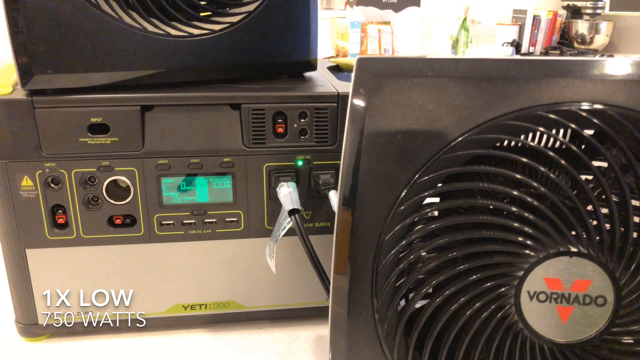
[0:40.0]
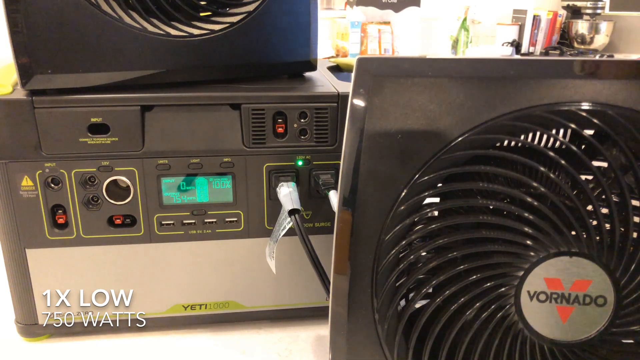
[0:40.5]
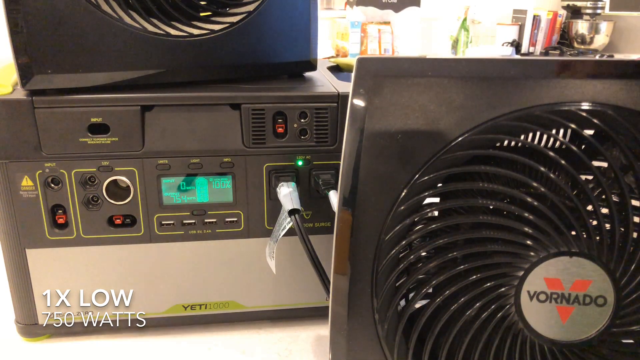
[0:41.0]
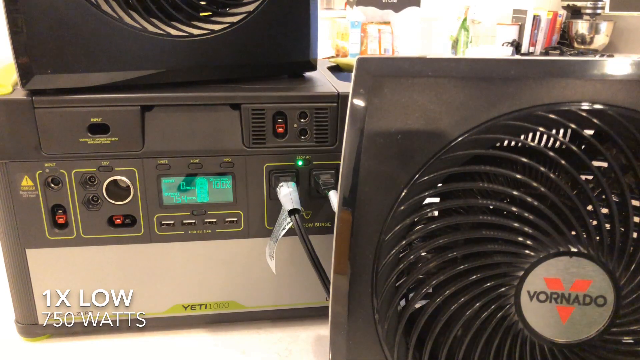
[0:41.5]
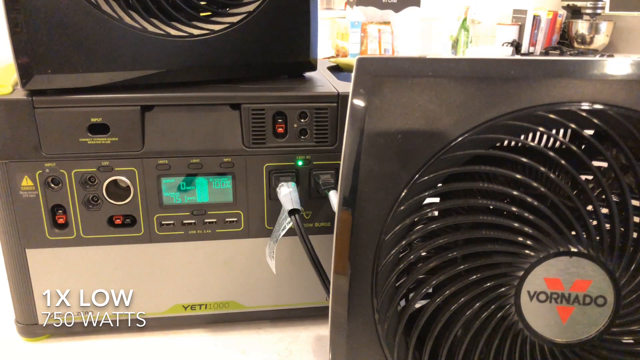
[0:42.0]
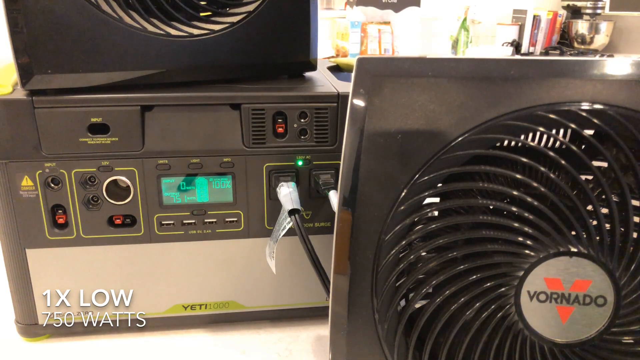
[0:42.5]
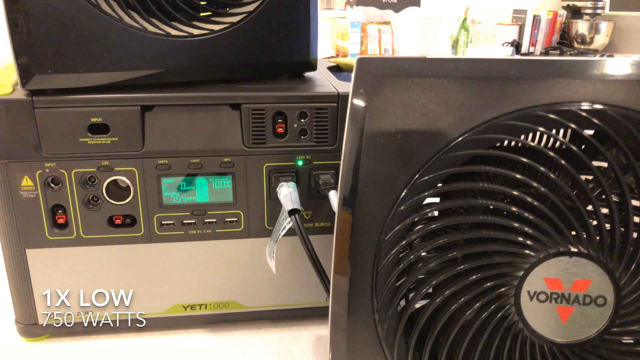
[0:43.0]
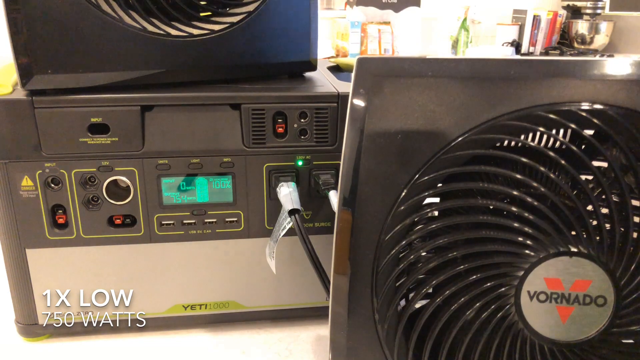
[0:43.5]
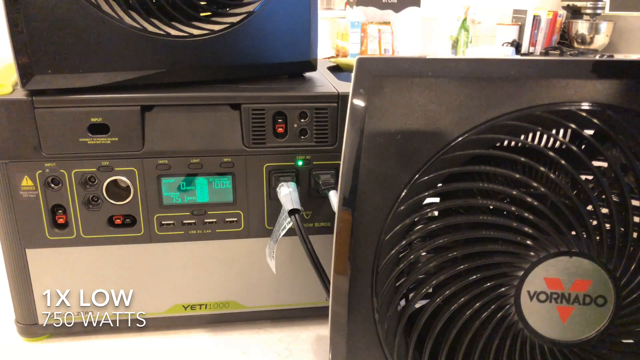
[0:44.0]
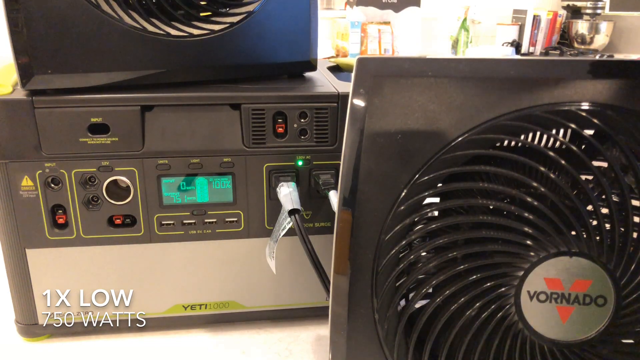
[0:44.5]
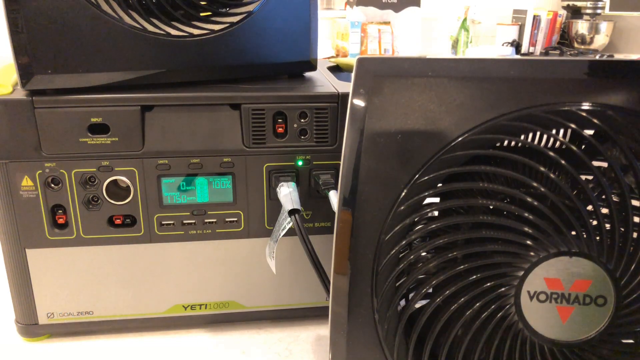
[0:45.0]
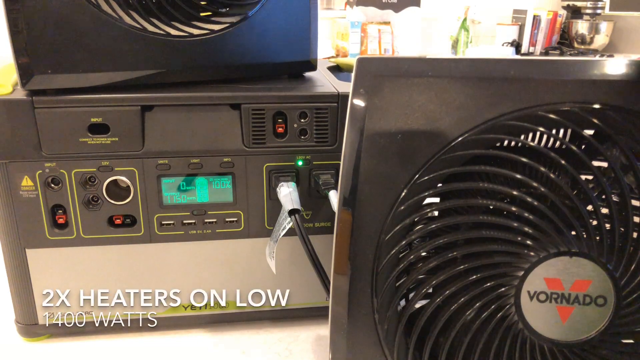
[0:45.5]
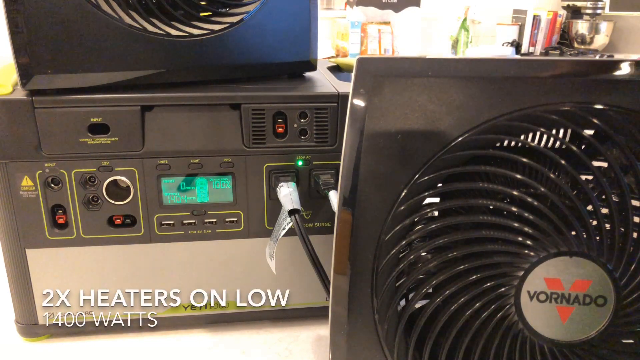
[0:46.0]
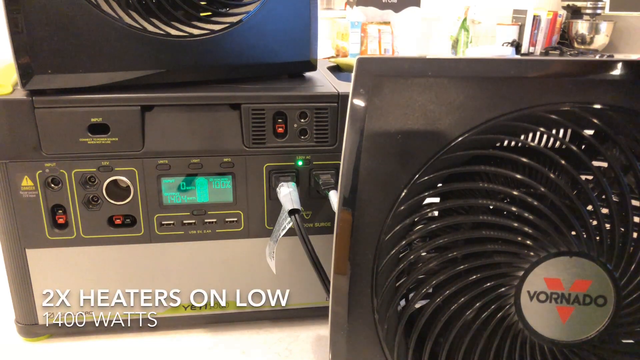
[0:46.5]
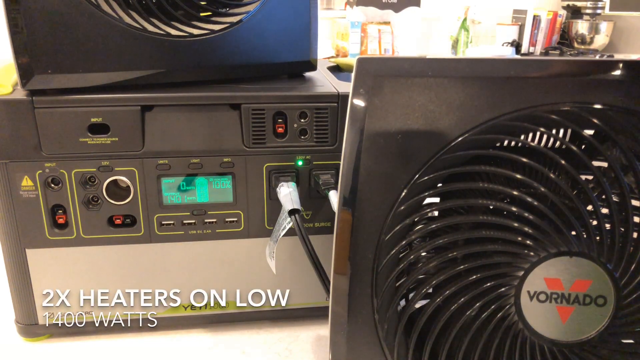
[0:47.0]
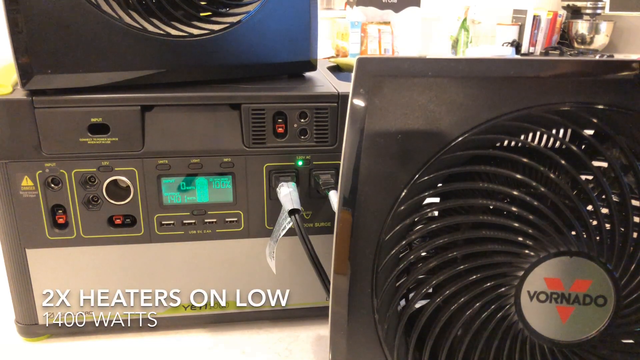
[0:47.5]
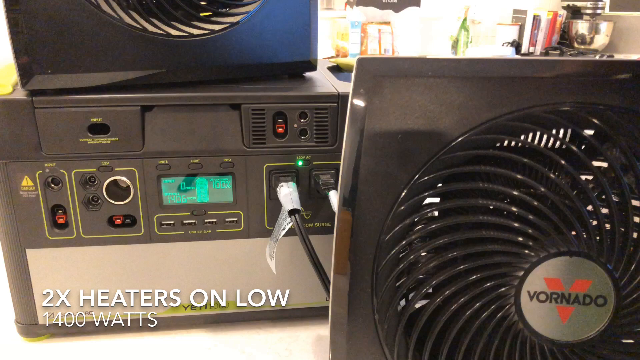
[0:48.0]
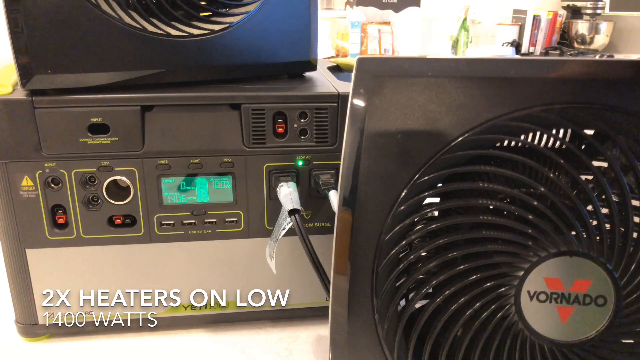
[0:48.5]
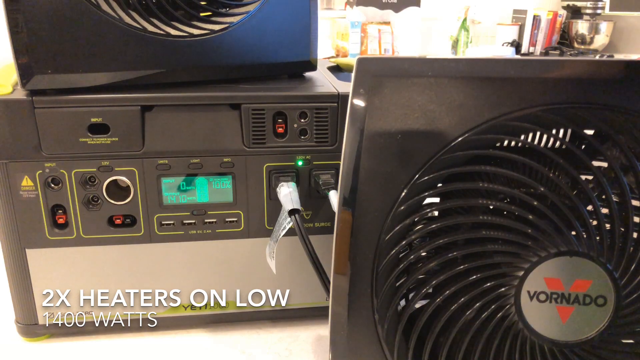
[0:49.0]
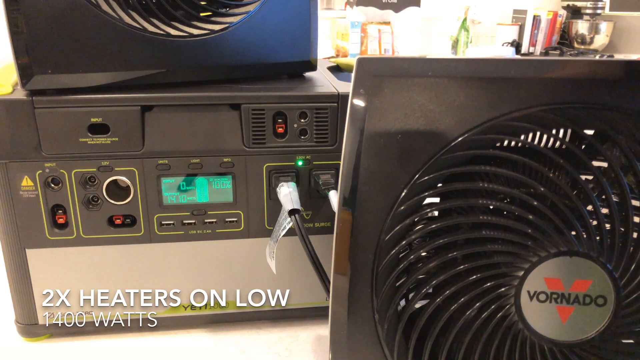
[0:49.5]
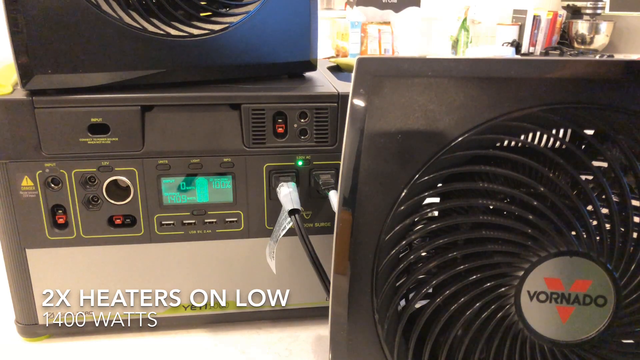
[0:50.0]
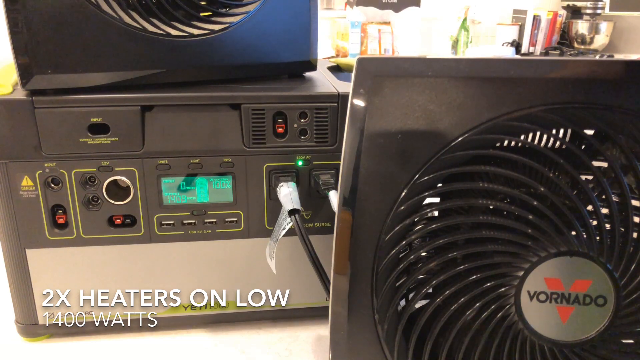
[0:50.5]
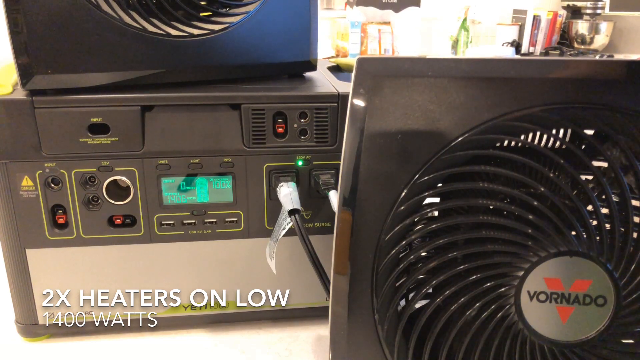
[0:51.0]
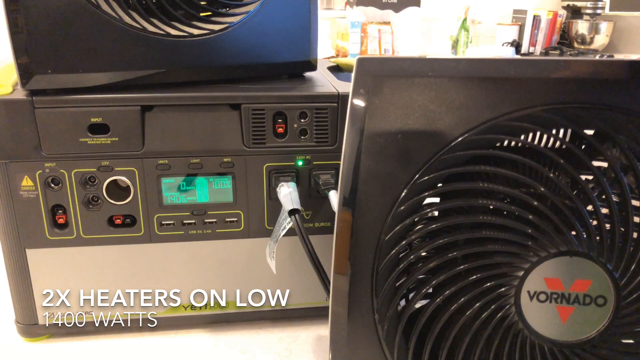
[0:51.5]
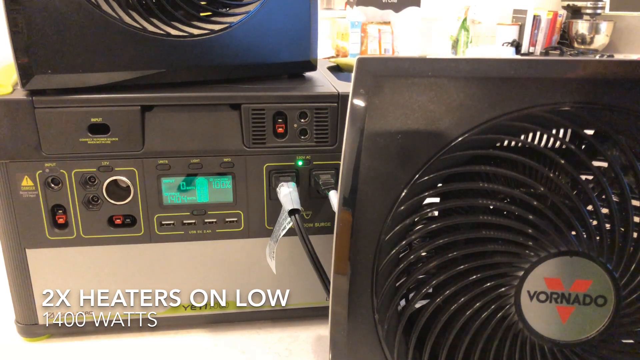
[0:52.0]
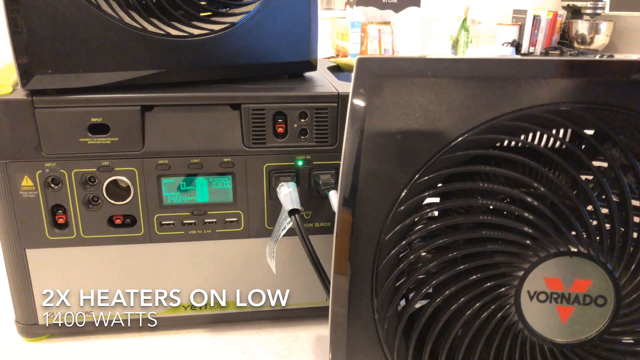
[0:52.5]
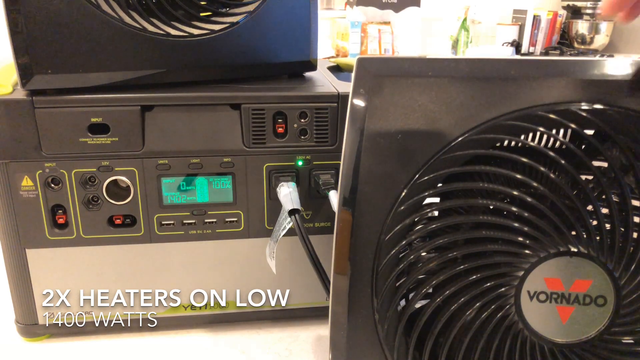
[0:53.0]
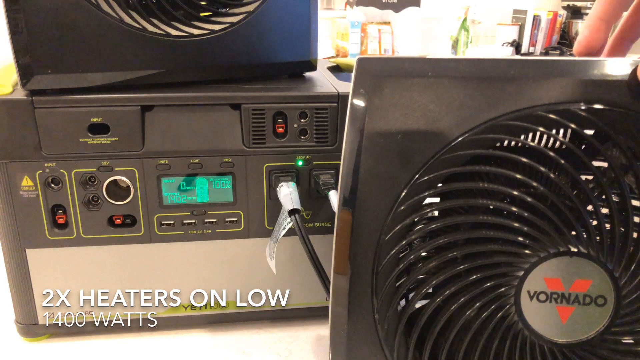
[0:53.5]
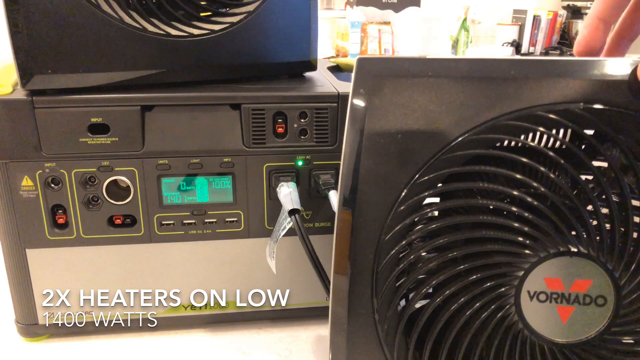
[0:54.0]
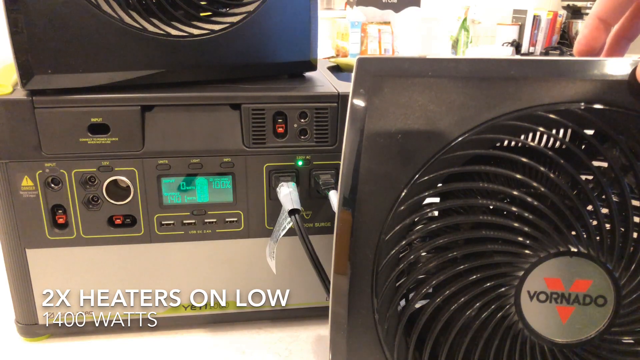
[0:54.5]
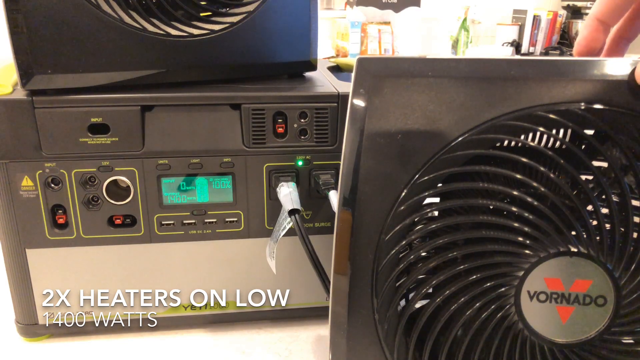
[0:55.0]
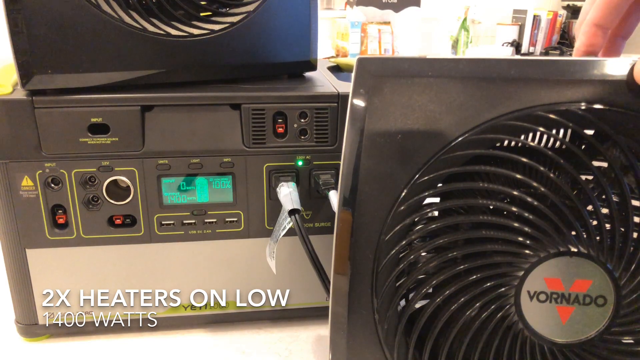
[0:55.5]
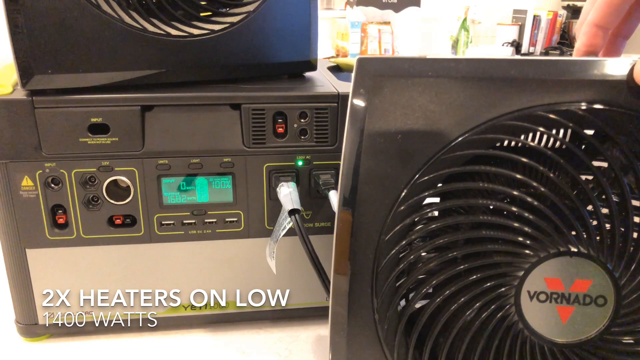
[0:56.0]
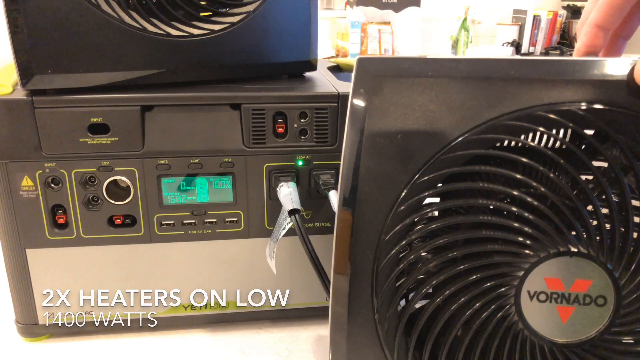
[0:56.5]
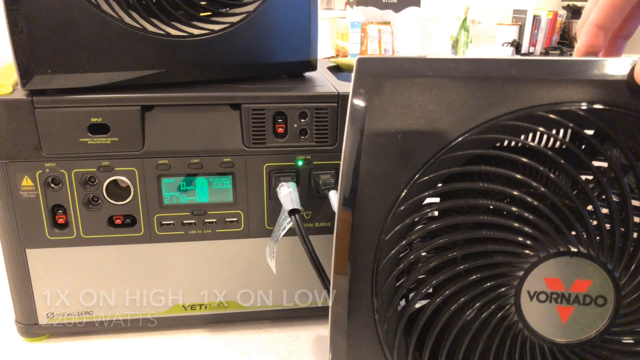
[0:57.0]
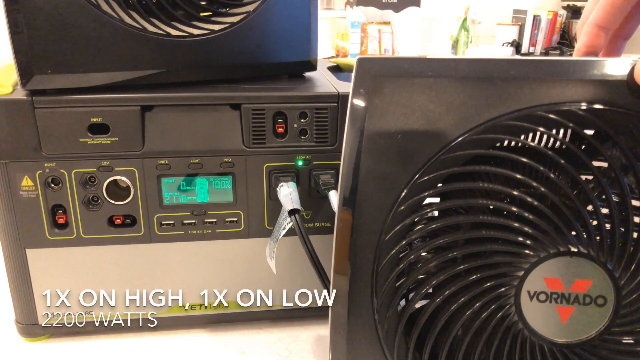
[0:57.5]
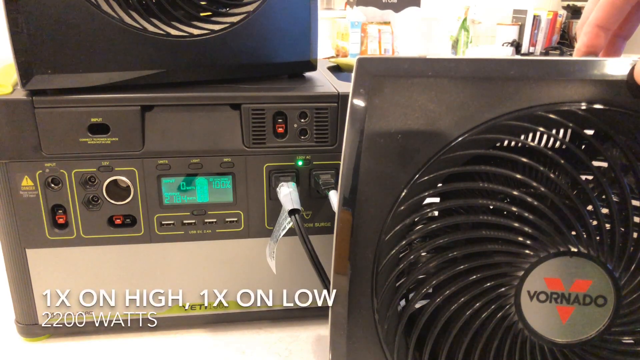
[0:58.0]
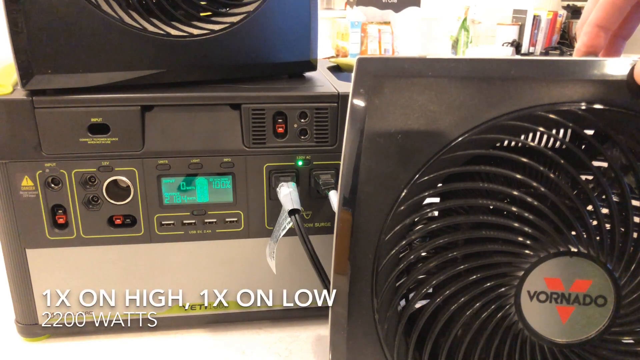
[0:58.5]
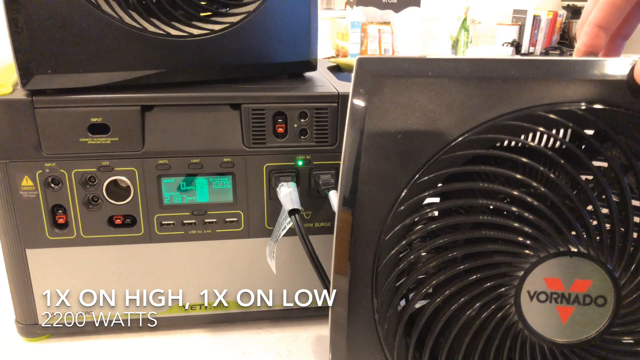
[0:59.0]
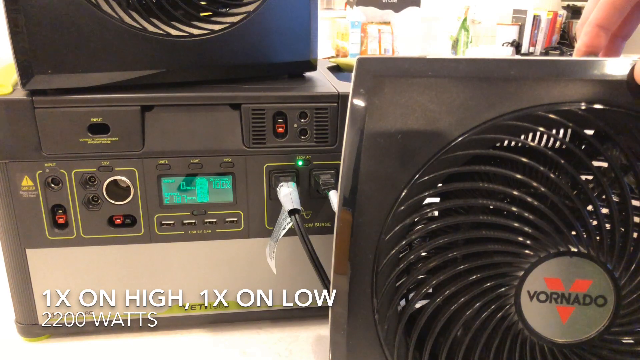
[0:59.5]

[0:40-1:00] A Vernado heater is plugged into the back of a receiver, whose screen shows green writing that reads "two times heaters on low", which is 1,400 watts. A person's hand touches the top of the Vernado heater, the type that spins on the inside when turned on. Another Vernado heater is resting on top of the receiver. A label hangs off the wire that is plugged in. The back of the receiver has many unused outlets and a yellow warning sign on the left-hand side.